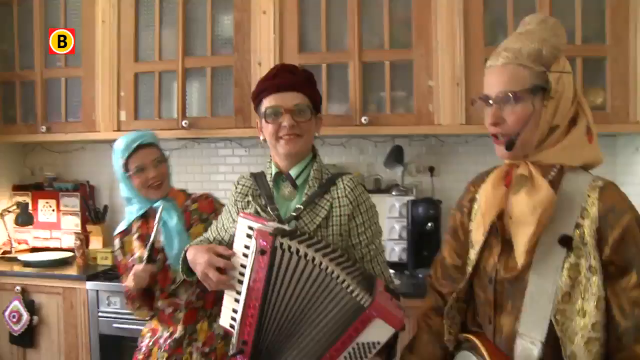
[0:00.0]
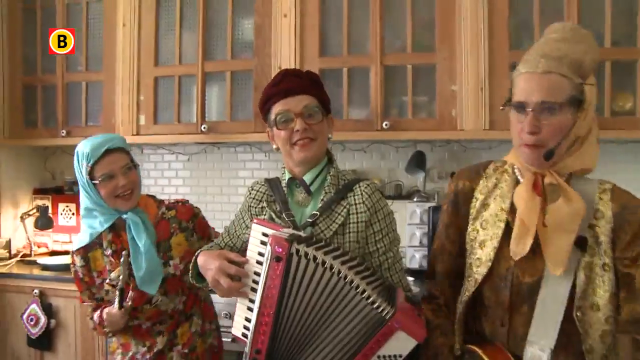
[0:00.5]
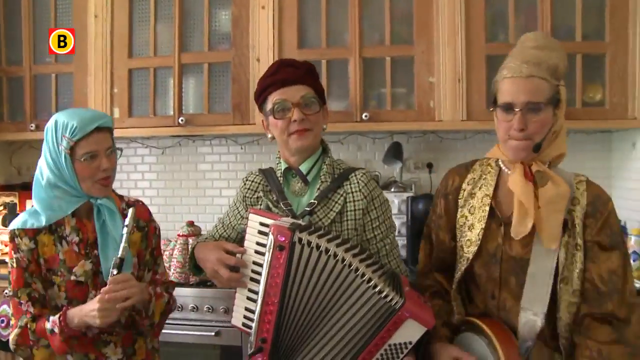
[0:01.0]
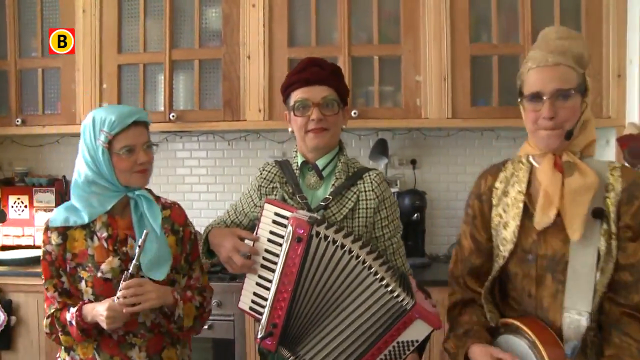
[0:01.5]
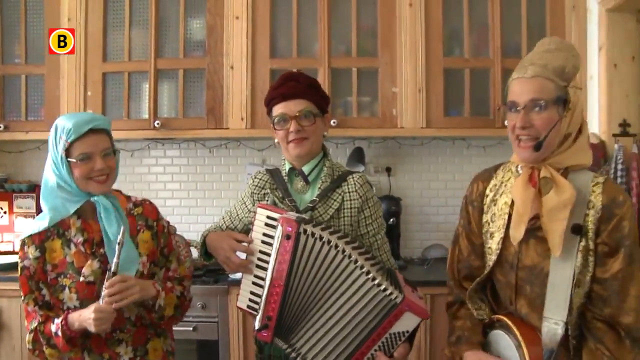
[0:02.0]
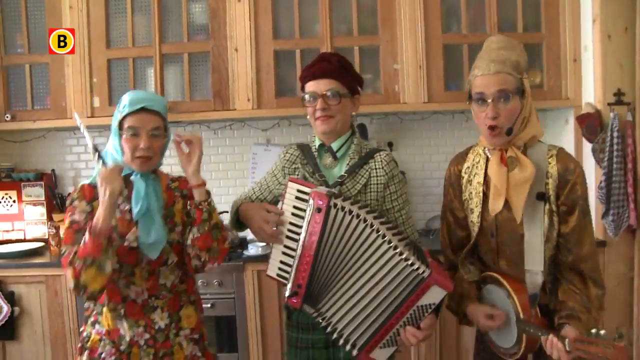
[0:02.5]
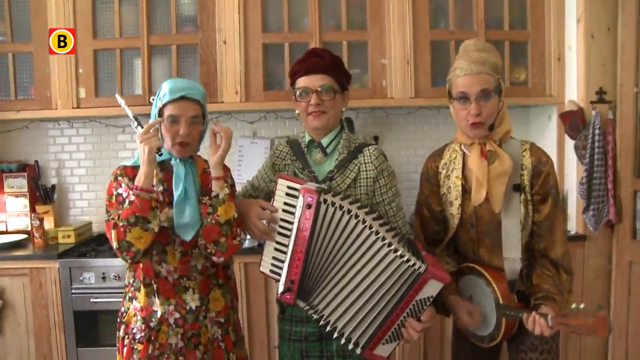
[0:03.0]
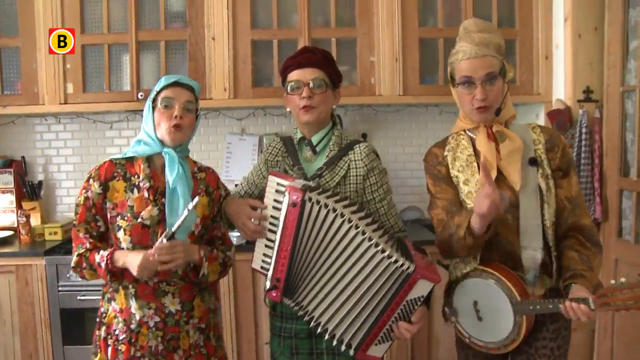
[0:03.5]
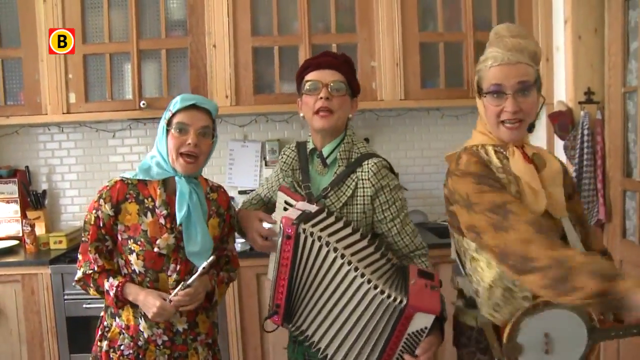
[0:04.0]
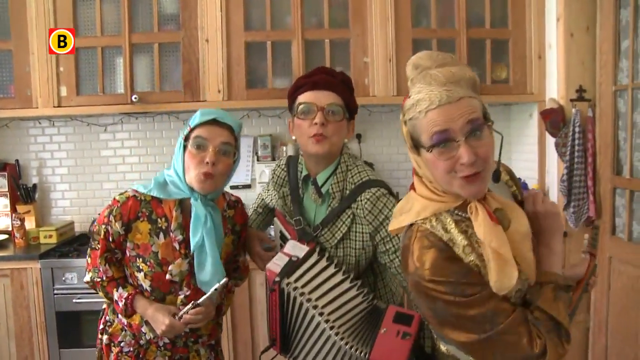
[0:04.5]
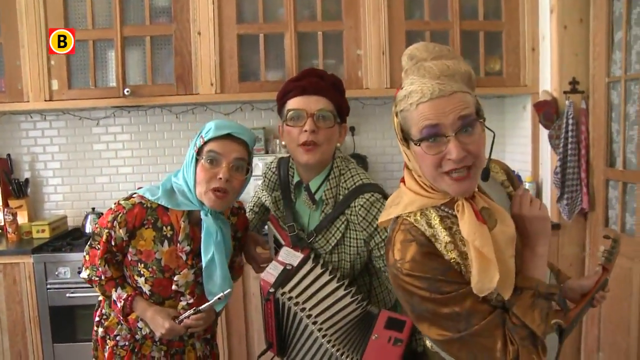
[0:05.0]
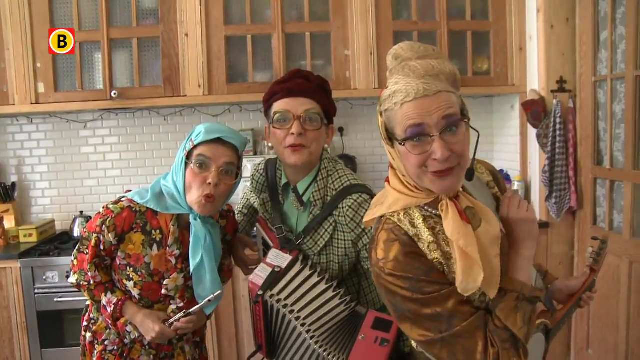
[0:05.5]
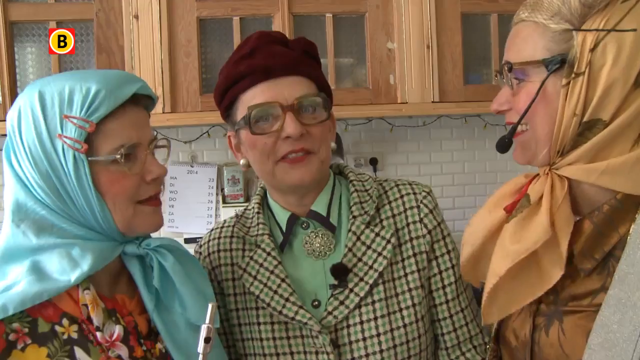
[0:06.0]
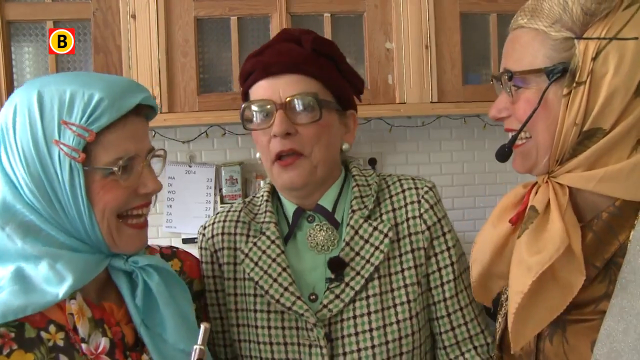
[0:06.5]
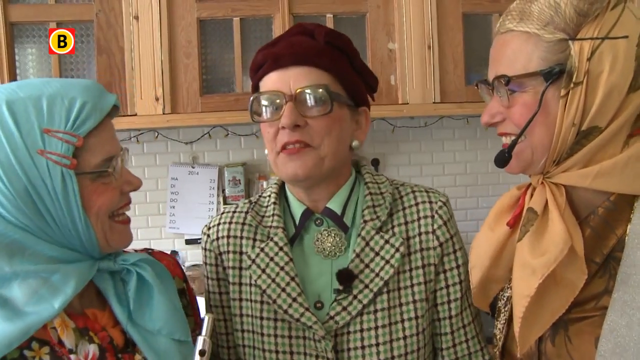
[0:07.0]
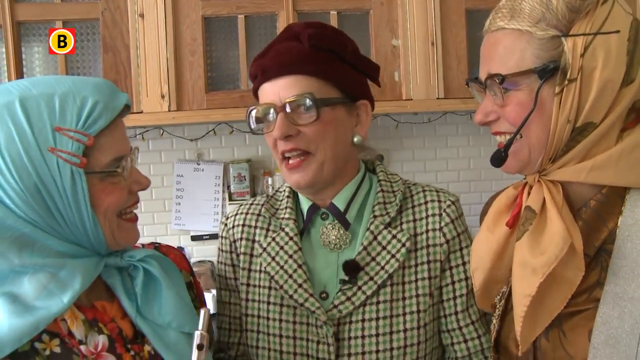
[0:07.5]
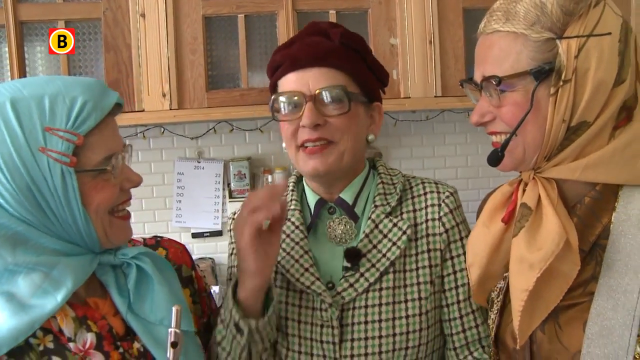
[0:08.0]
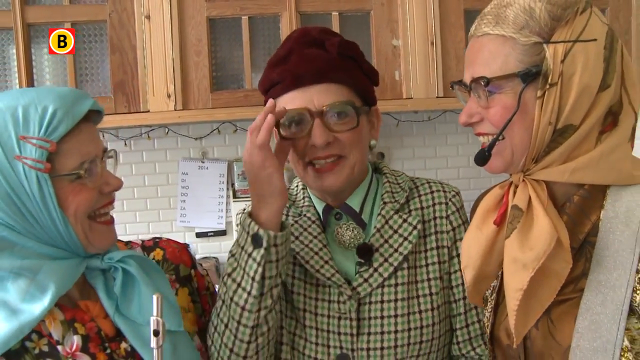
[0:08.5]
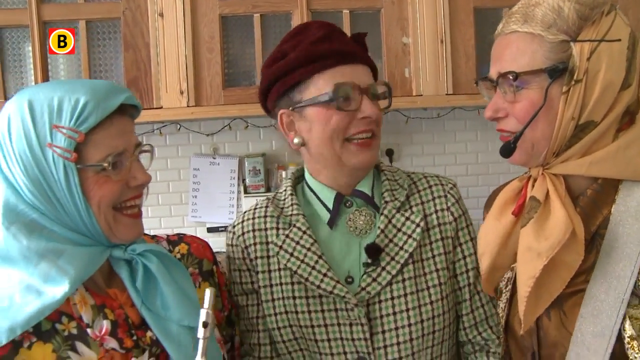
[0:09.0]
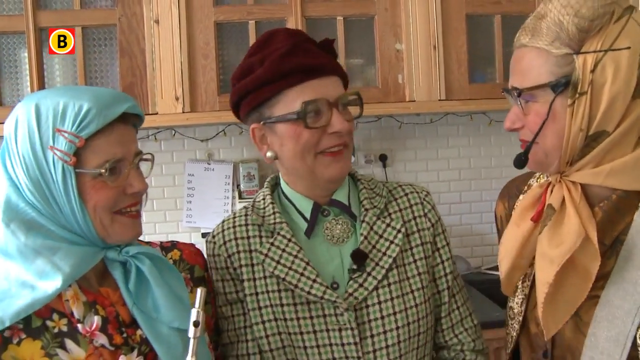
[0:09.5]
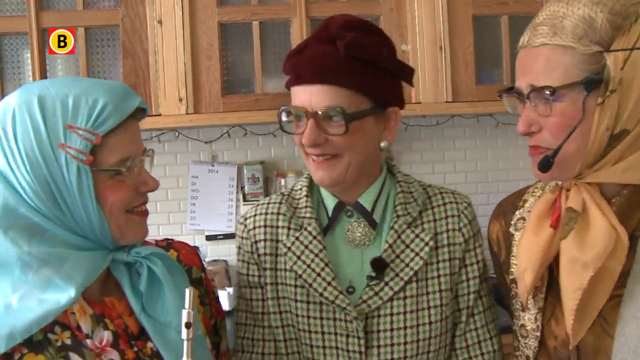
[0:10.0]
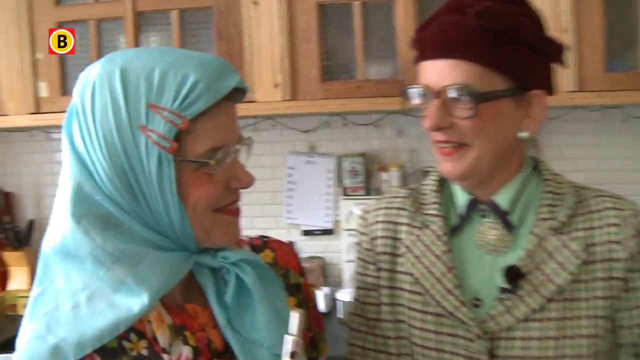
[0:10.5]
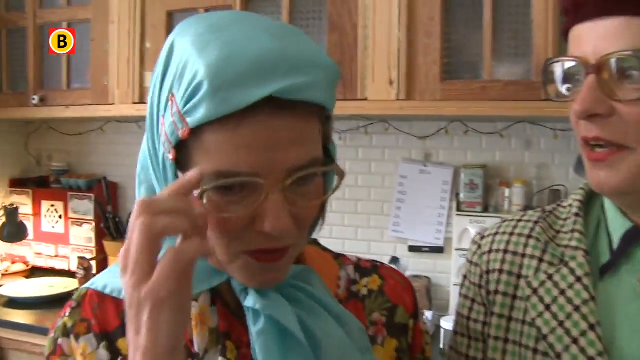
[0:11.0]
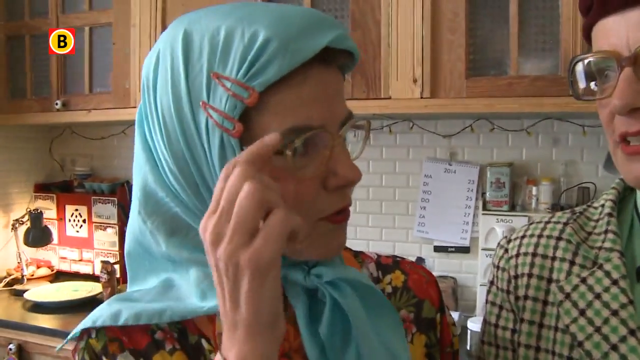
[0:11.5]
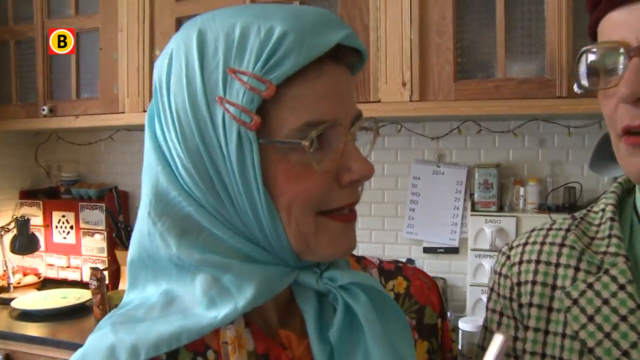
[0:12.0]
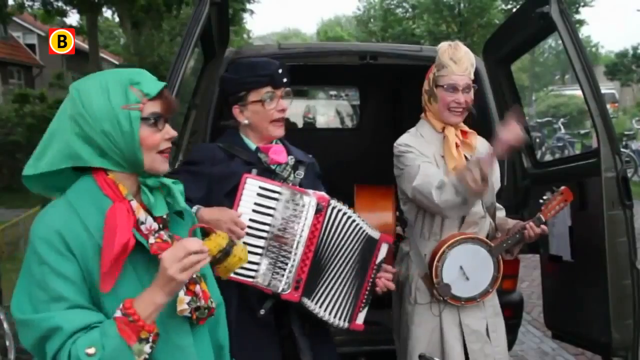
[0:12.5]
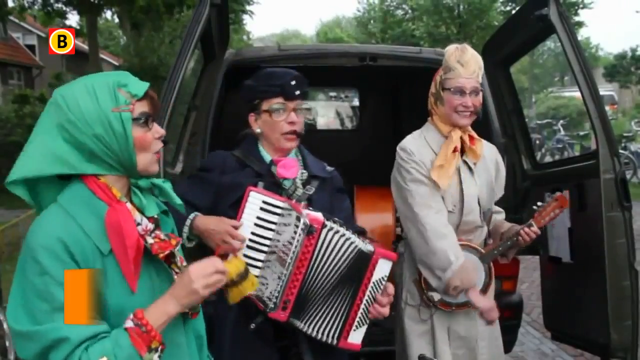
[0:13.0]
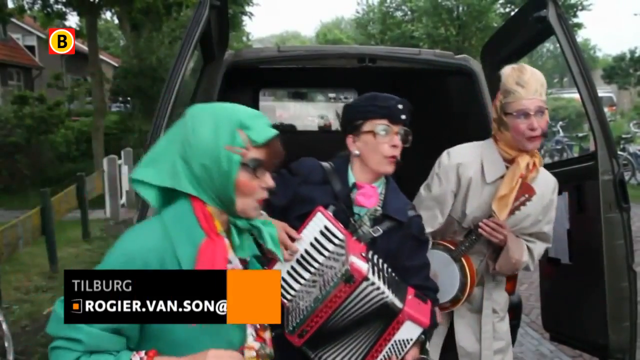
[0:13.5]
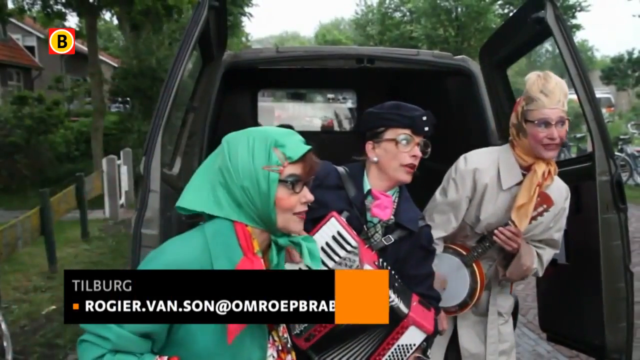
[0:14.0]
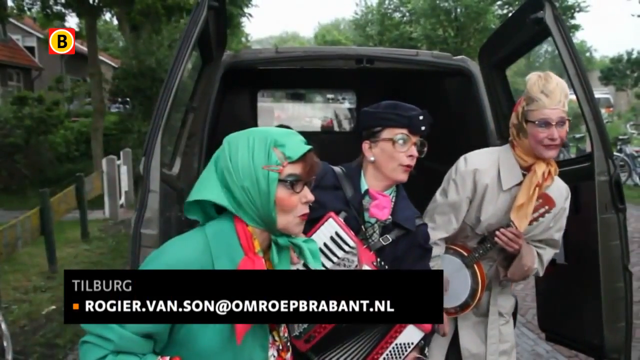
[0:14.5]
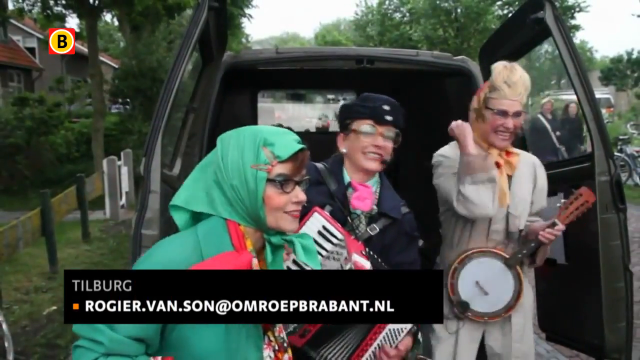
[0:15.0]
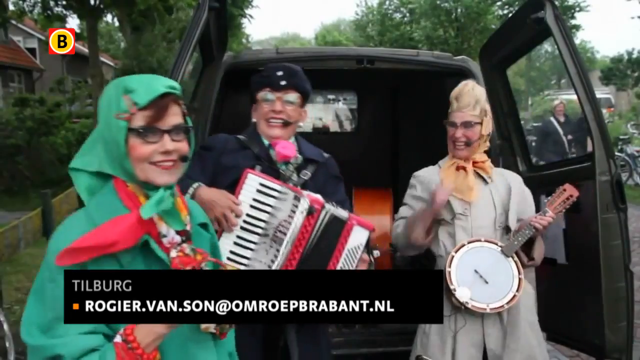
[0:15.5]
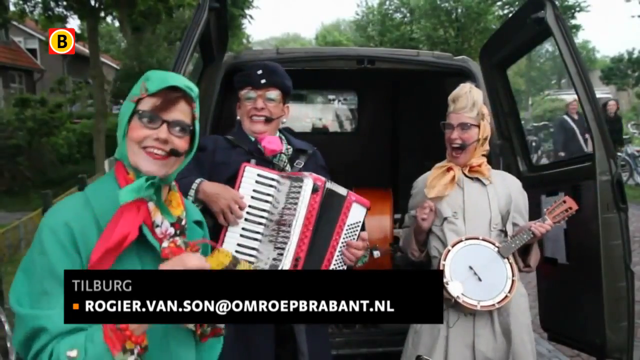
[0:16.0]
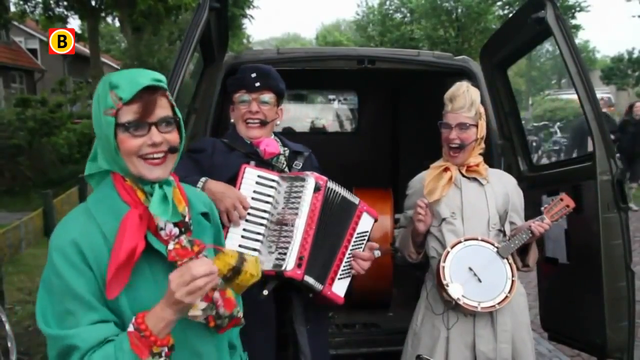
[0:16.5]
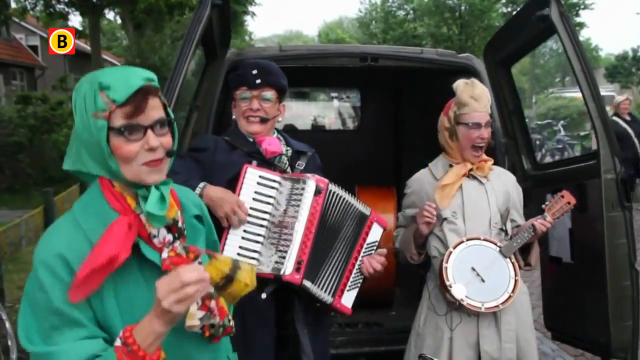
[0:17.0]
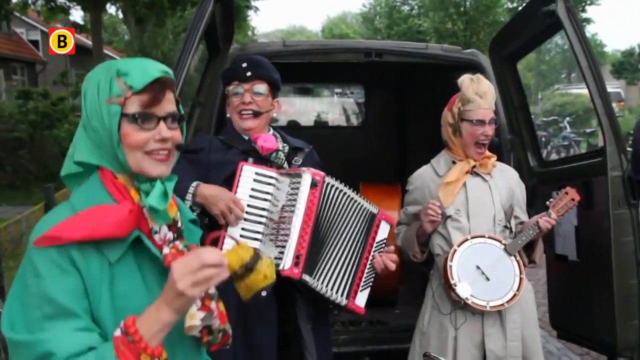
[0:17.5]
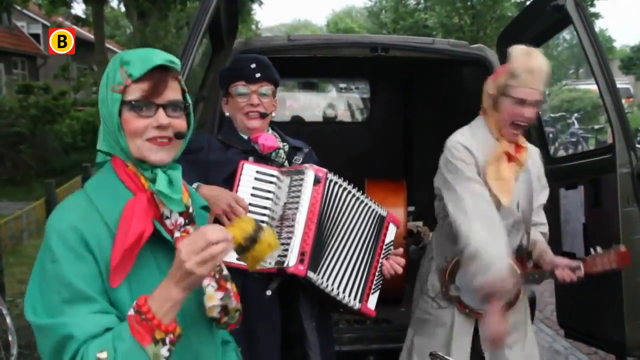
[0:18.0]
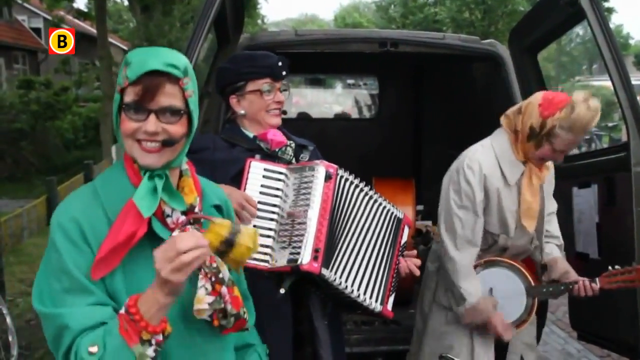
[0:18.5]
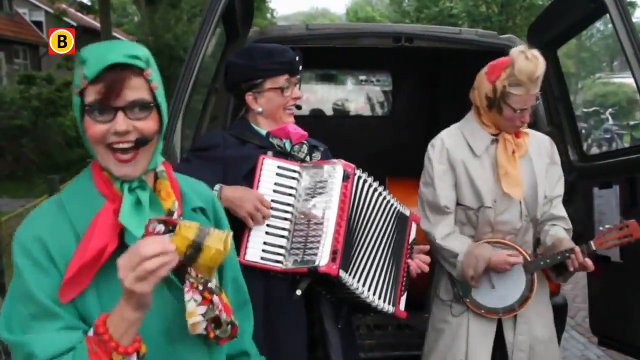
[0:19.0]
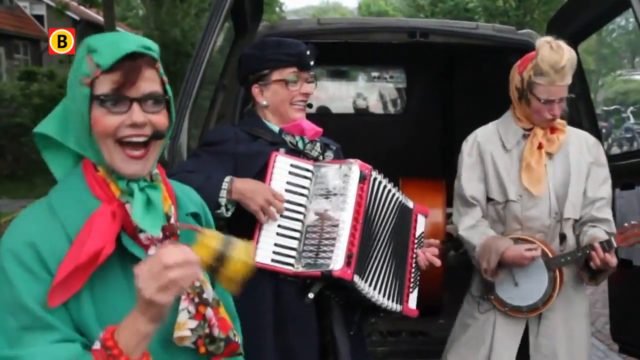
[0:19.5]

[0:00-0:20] Three women are inside a kitchen whose walls are covered with subway tiles. There are counters with various lamps and decorative items, and light brown wooden cabinets with frosted glass panes through which stacks of porcelain dishes can be seen. The women wear colorful outfits. The woman on the left wears a floral dress with a light blue headscarf and holds a silver metal flute. The woman in the center wears a plaid jacket over a green shirt and a red headscarf, and plays a red accordion. The woman on the right wears a gold vest with a gold dress underneath and a gold headdress, and plays some kind of banjo or string instrument. All three wear glasses and have microphones attached to their ears and placed in front of their mouths. They sing toward the camera and smile. The video cuts to a close-up of them no longer singing; they seem to be talking to each other quite closely, and the camera pans across each woman's face from right to left. It then cuts to the three women outside, just outside a black utility van with its back doors open, playing their respective instruments: the woman on the right plays a ukulele or banjo, the one in the center plays a red accordion, and the woman on the left holds a yellow painted cowbell.